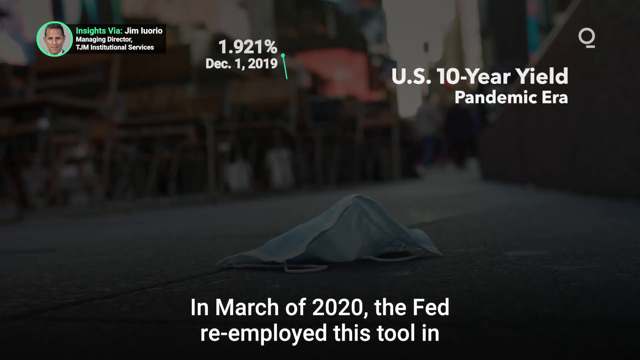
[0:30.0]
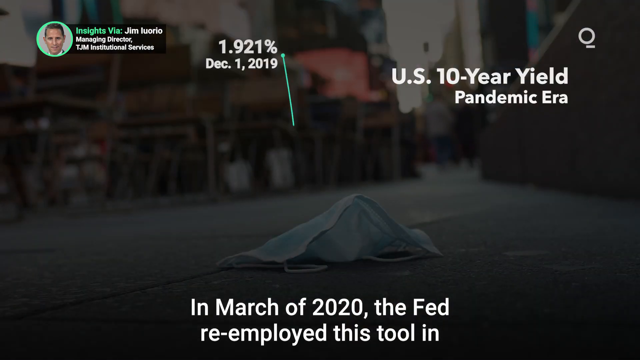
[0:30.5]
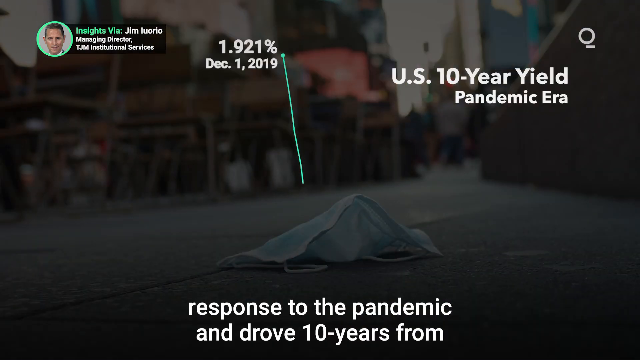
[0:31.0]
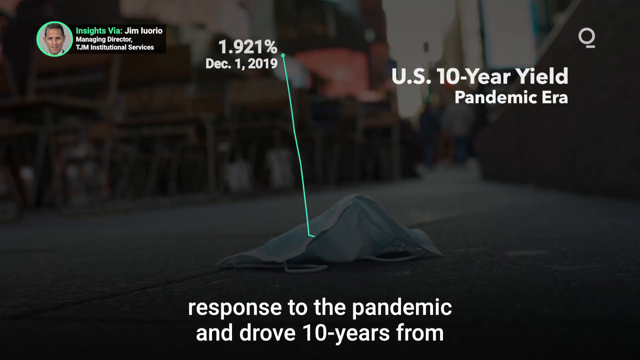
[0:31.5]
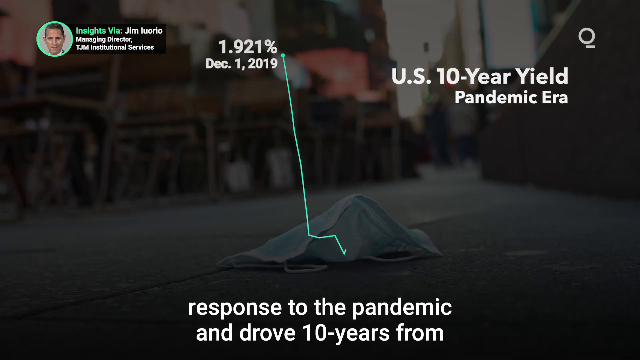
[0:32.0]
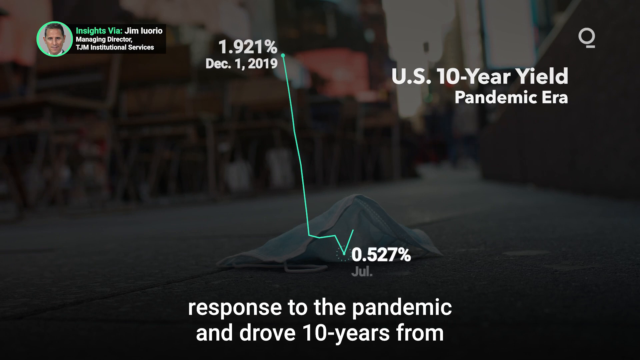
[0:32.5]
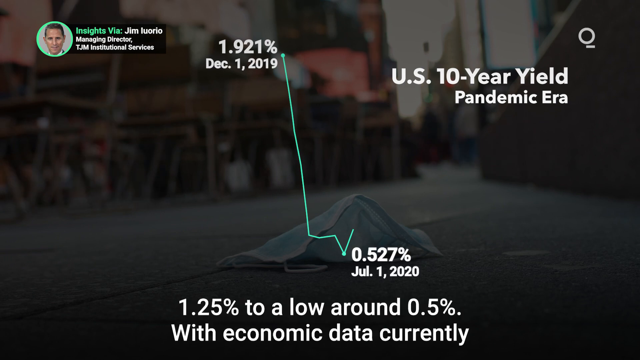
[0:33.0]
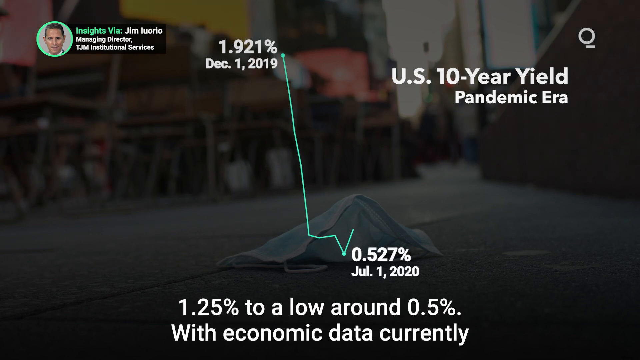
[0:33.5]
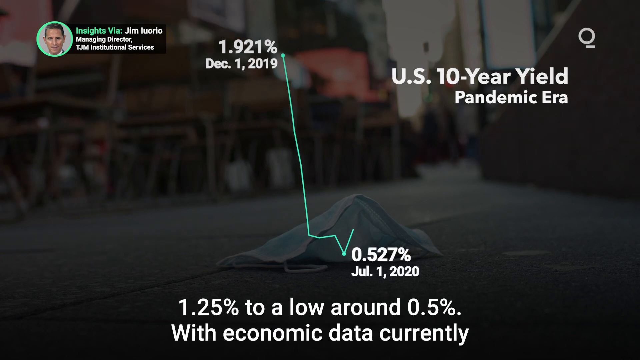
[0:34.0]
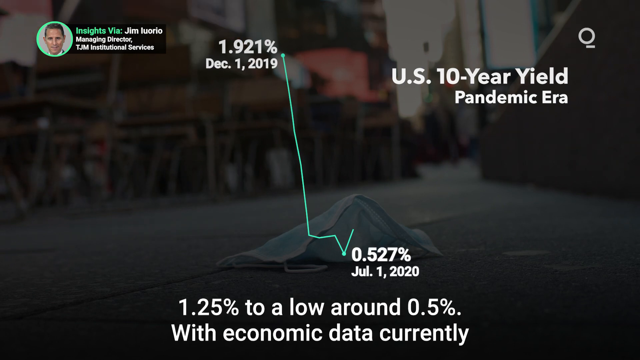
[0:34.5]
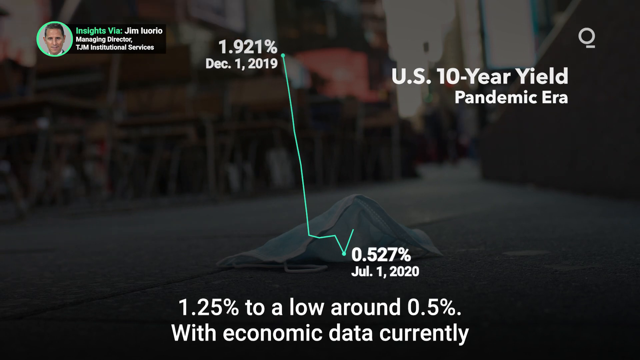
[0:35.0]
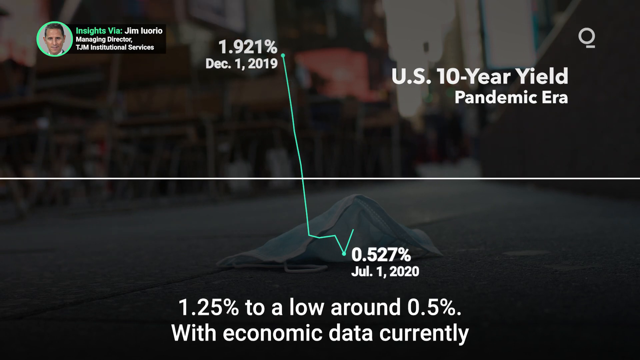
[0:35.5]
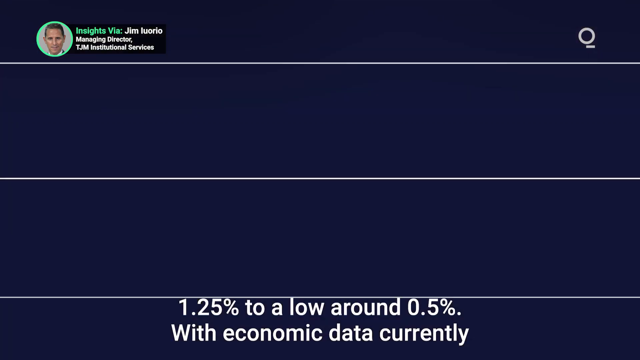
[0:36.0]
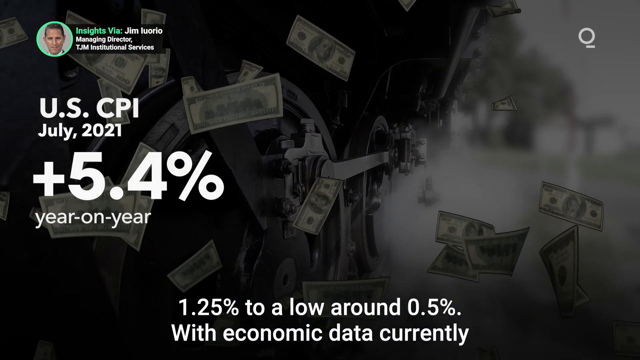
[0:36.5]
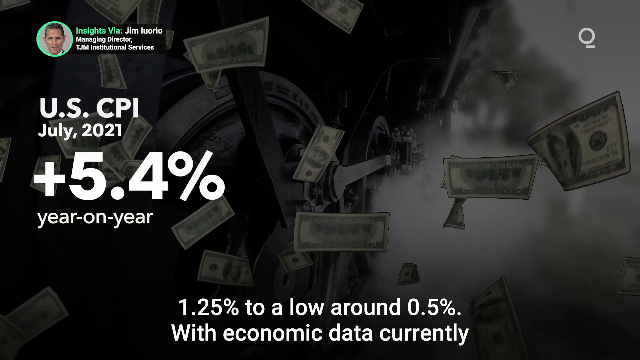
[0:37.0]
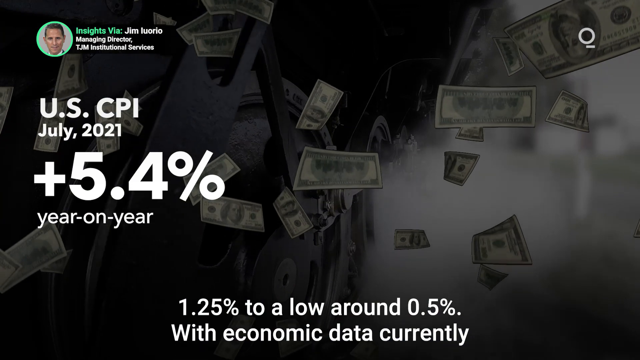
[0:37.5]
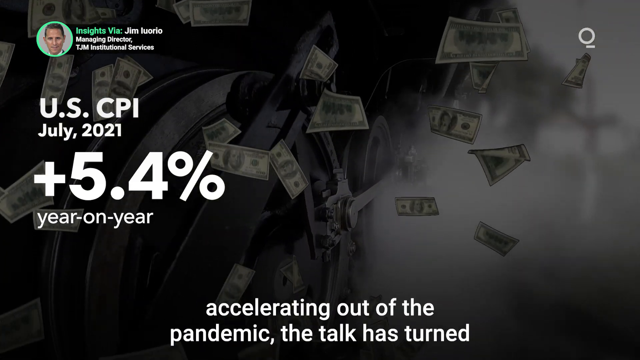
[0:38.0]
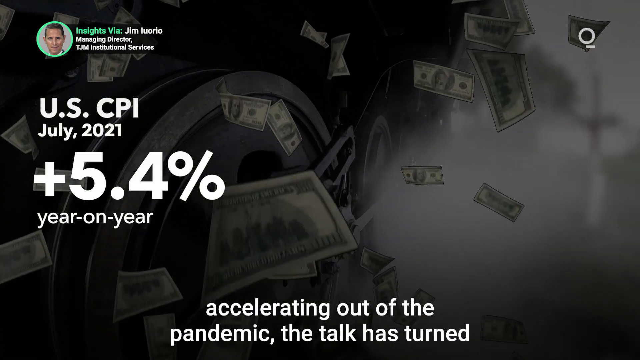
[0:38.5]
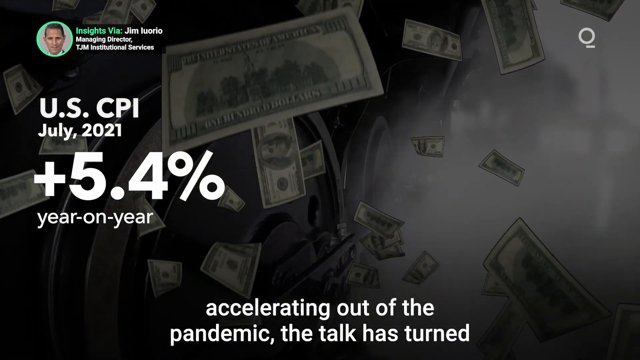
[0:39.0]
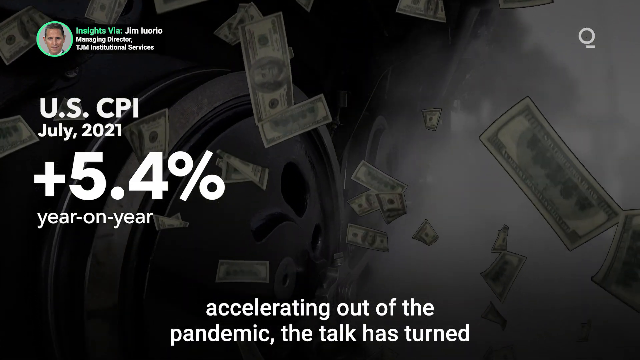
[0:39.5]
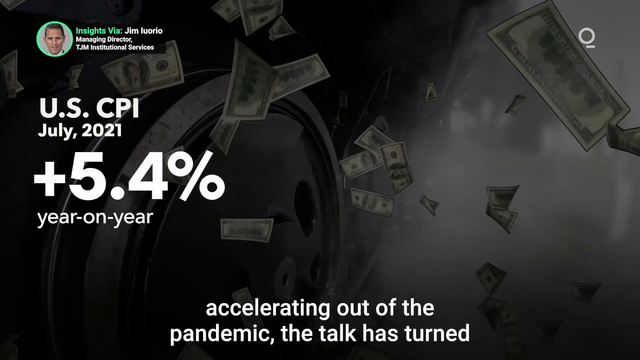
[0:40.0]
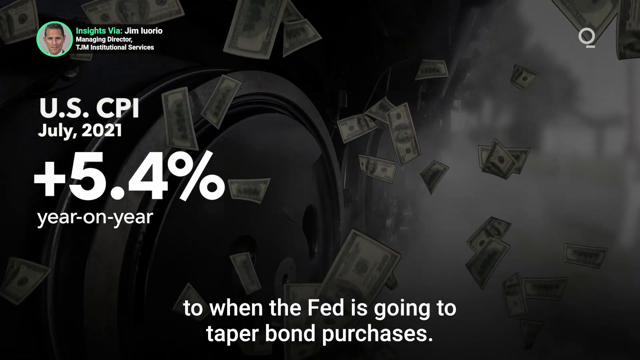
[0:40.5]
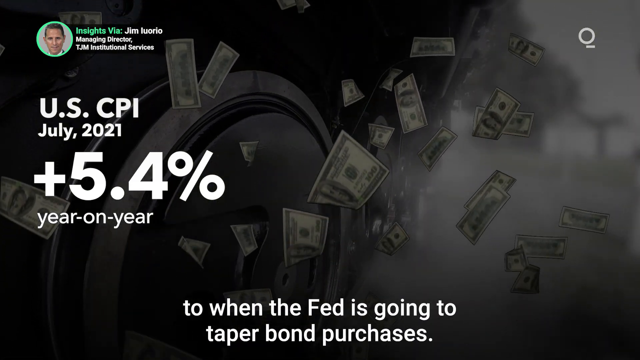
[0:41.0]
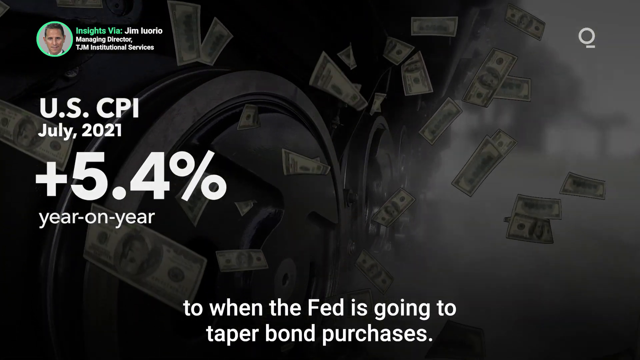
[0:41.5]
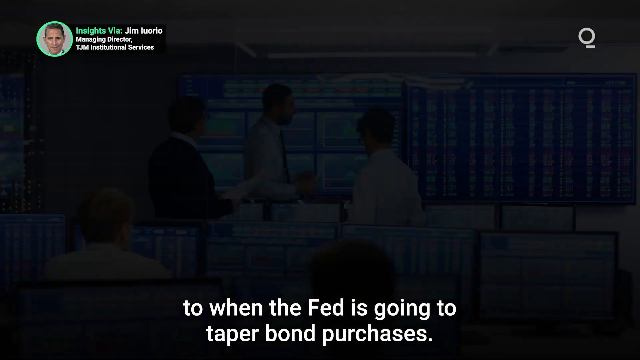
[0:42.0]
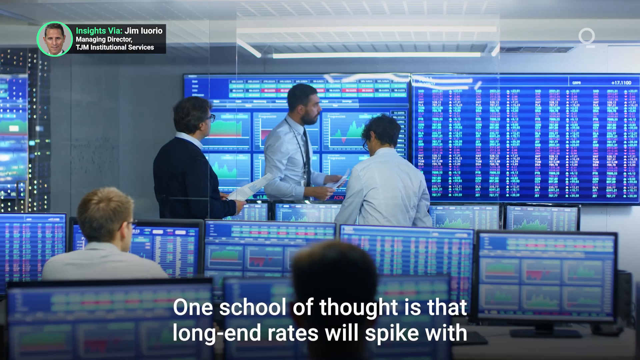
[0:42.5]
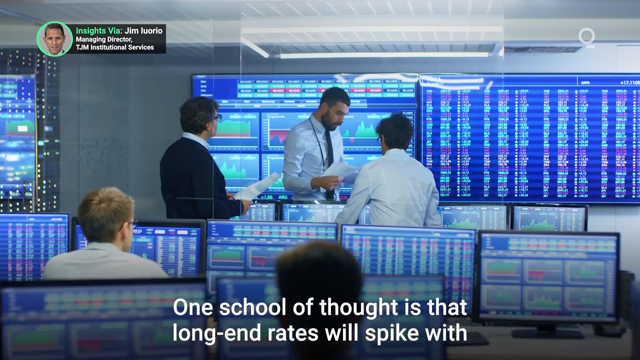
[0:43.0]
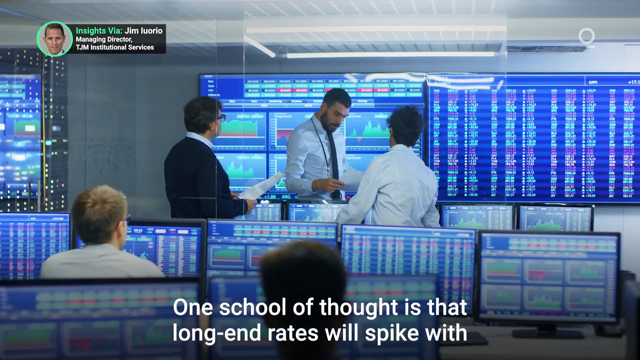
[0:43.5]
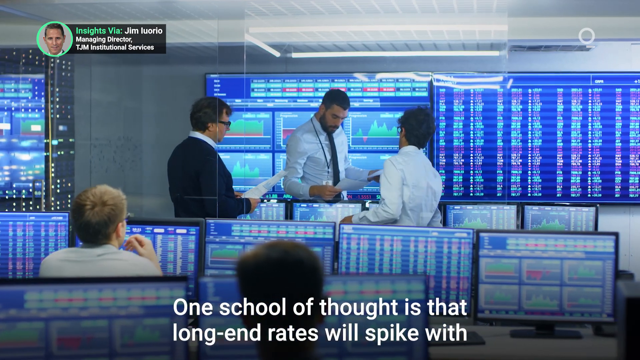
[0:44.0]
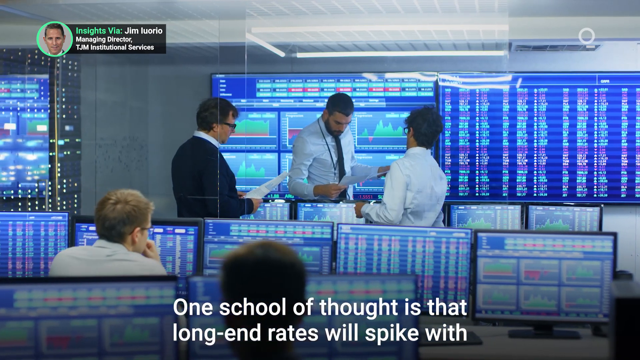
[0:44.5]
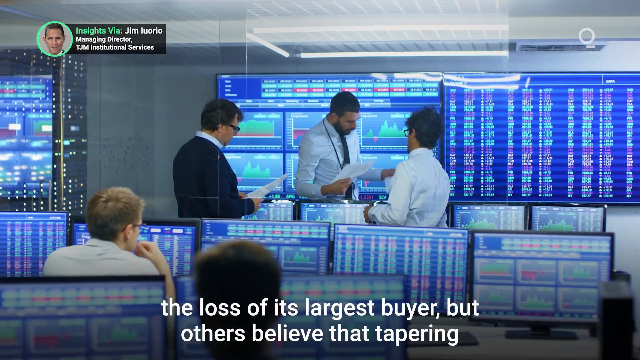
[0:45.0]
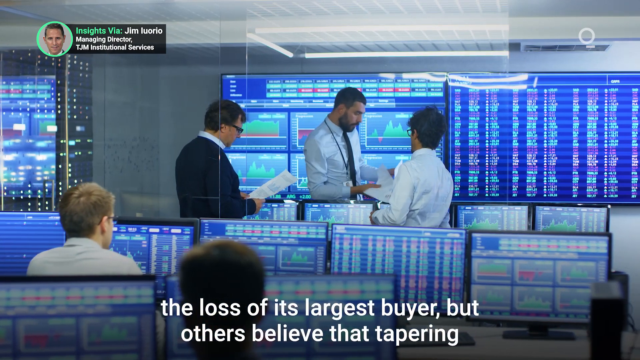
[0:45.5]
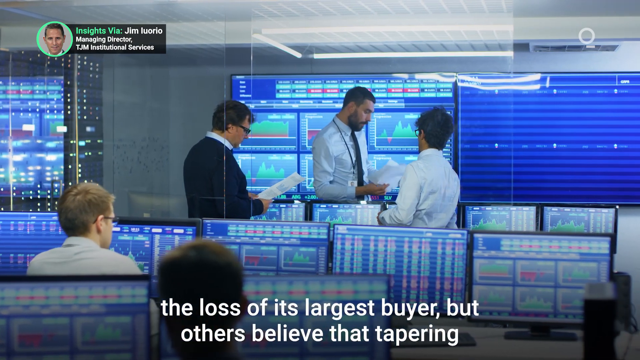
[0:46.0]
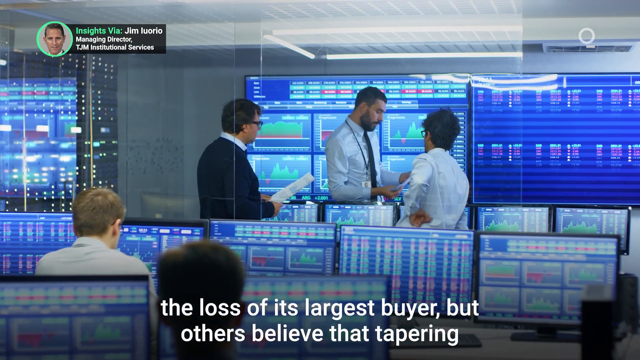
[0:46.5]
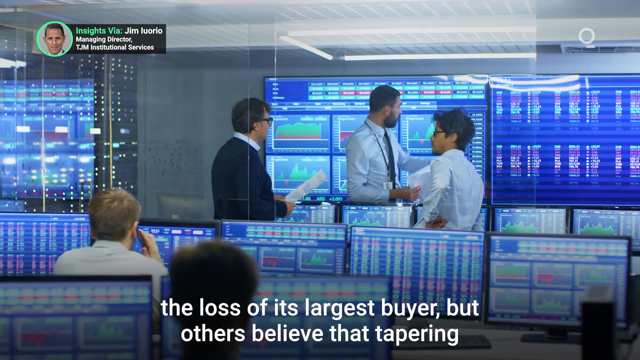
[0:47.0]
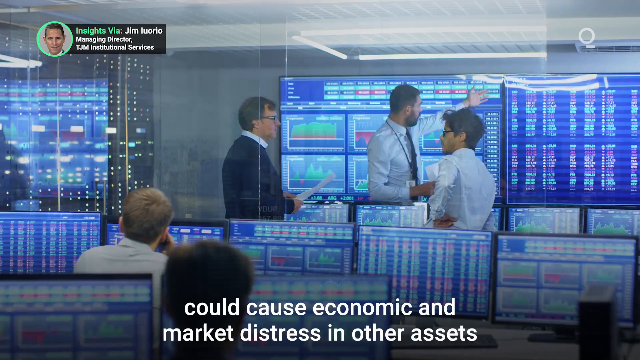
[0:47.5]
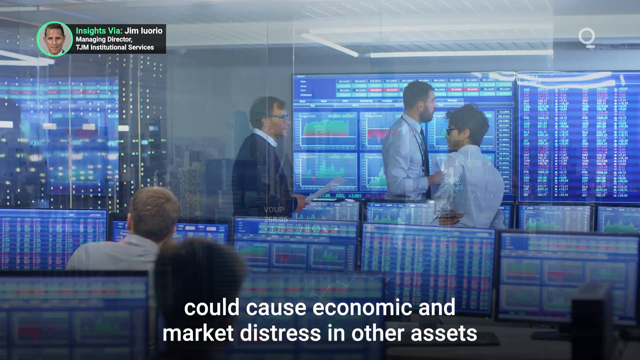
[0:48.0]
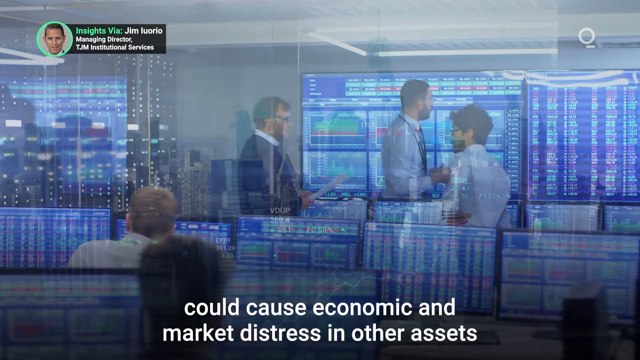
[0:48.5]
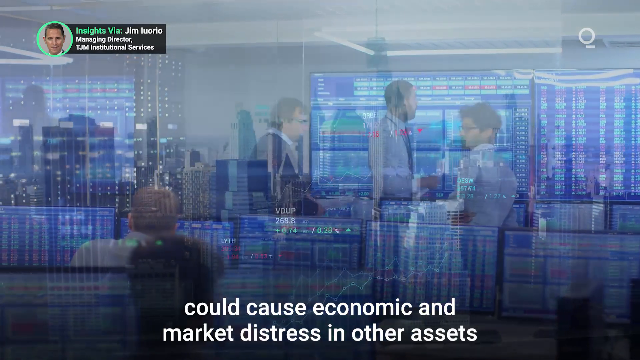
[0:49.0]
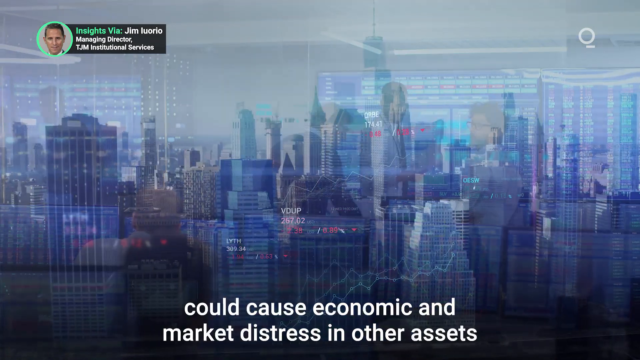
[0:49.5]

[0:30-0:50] The same page with the logo and picture of Jim Iorio, managing director, is up. A data point for December 1st 2019 is shown, and then a line drops straight down to a point for July of 2020. The caption says "US 10-year yield in the pandemic era," and a caption at the bottom says "1.25% to a low around 0.5% with the economic data currently accelerating out of the pandemic the talk has turned to when the Fed is going to taper bond purchases." A scene follows with a graphic of paper money bills floating up and out of the top portion of the screen, with the outline of a car visible behind the bills. Text beginning "One school of thought is that the long end rates will" appears. Men in shirts and ties without jackets are shown among screens all over the place that look like Wall Street computer screens; three men are standing, gesturing and working, and two men are seated behind the standing men, looking at computer screens.